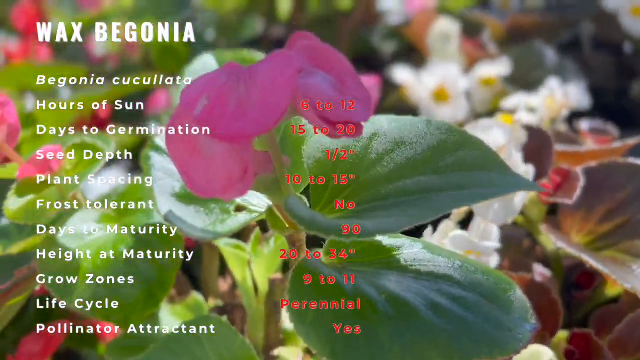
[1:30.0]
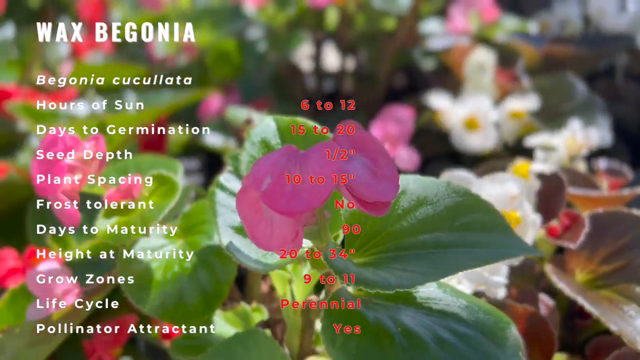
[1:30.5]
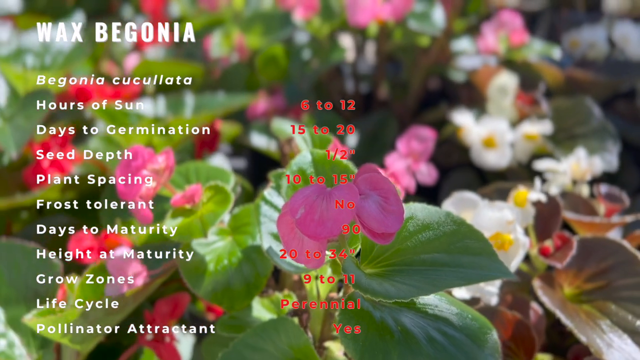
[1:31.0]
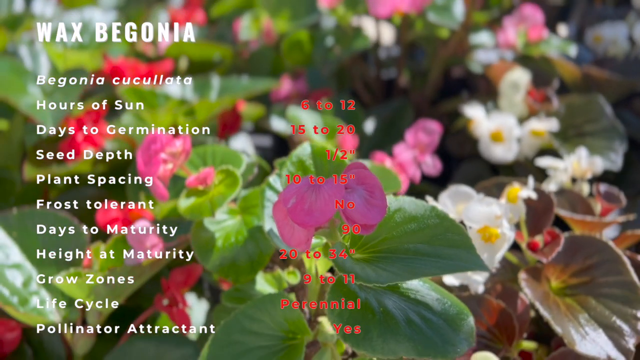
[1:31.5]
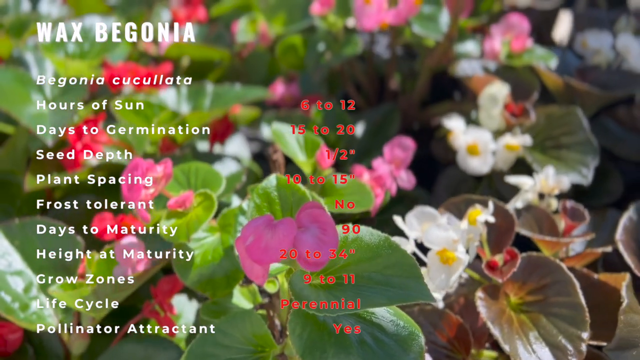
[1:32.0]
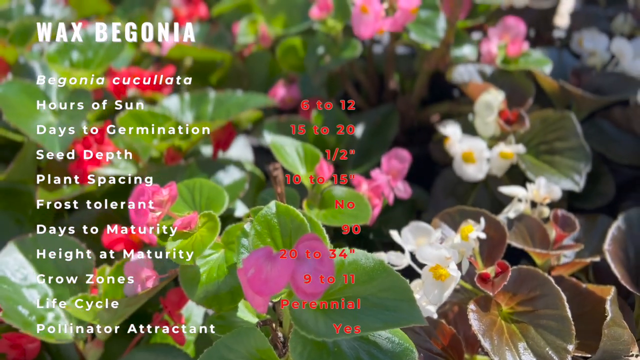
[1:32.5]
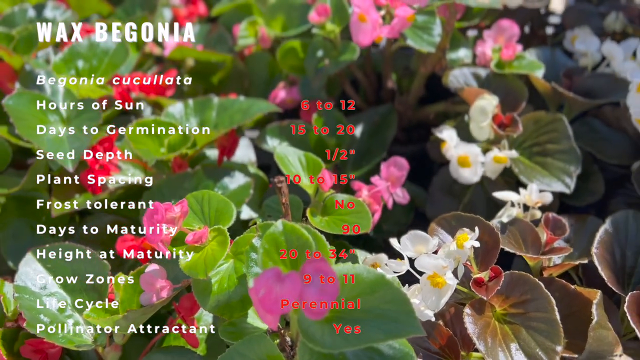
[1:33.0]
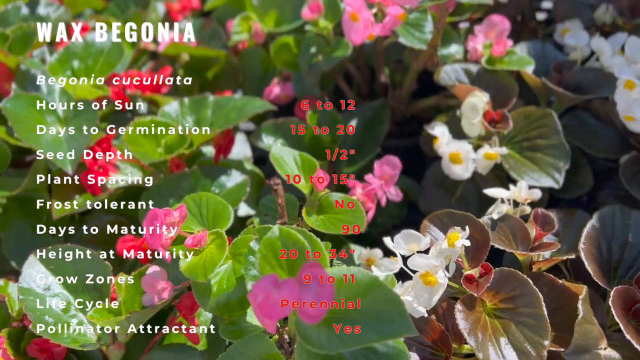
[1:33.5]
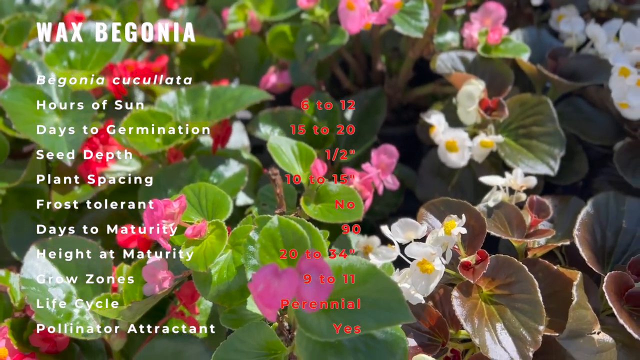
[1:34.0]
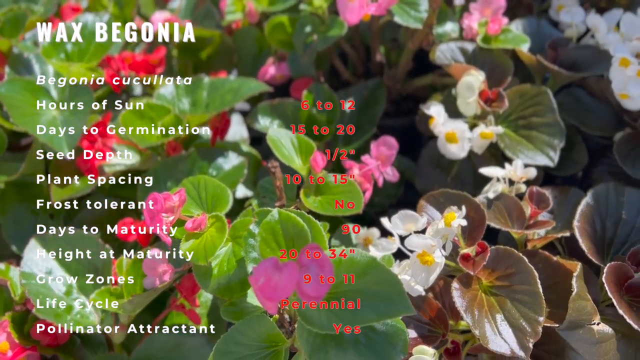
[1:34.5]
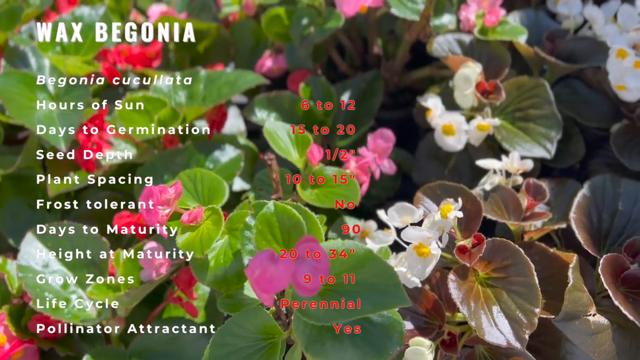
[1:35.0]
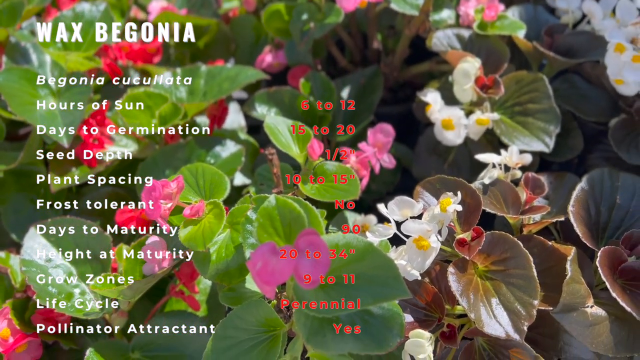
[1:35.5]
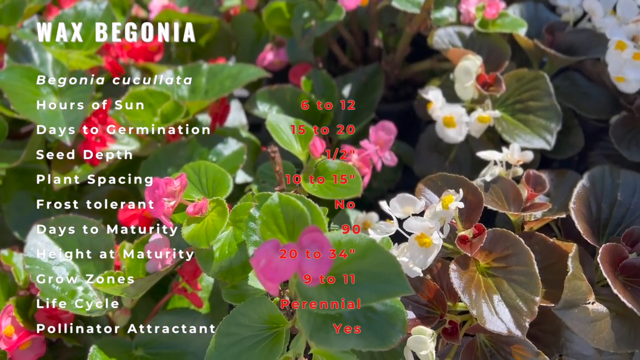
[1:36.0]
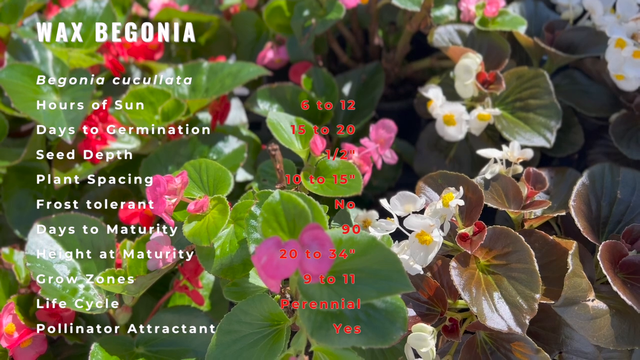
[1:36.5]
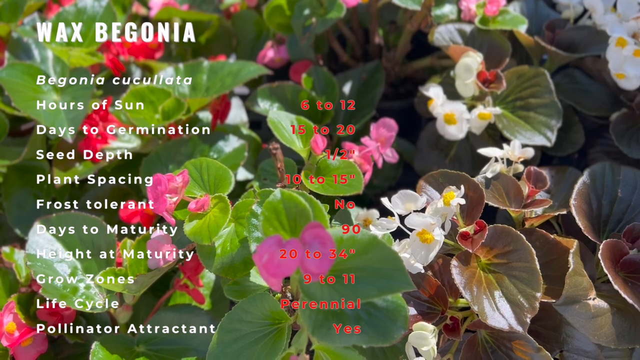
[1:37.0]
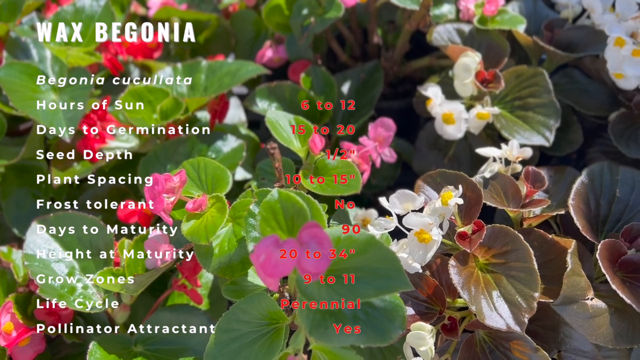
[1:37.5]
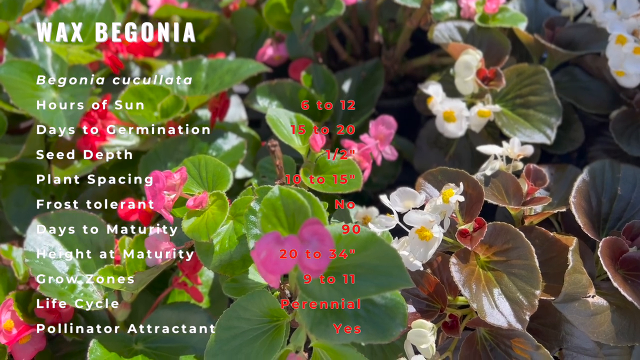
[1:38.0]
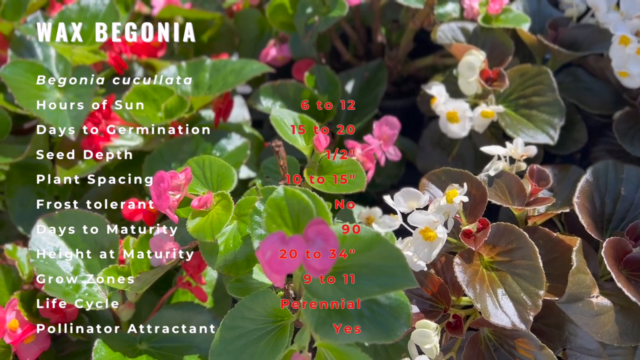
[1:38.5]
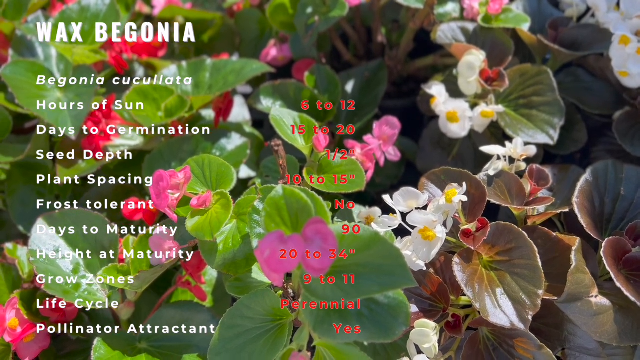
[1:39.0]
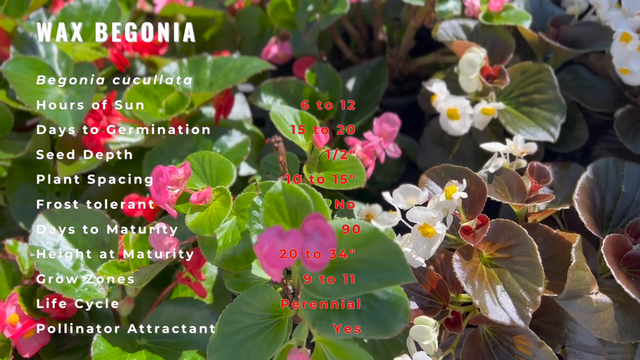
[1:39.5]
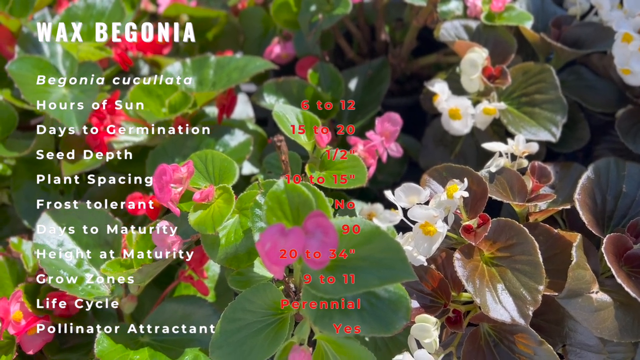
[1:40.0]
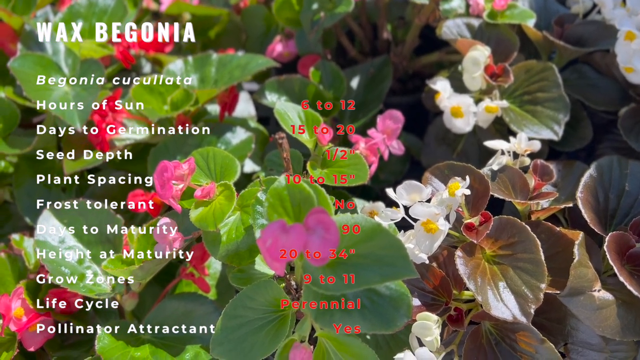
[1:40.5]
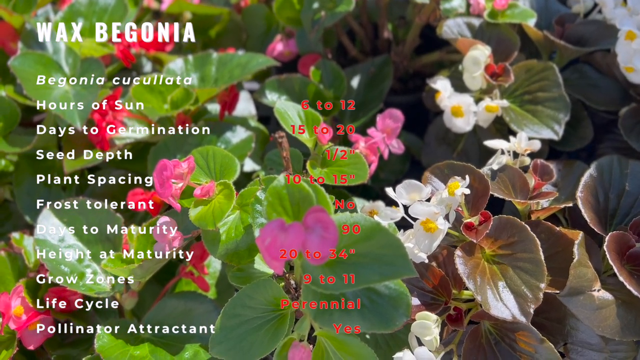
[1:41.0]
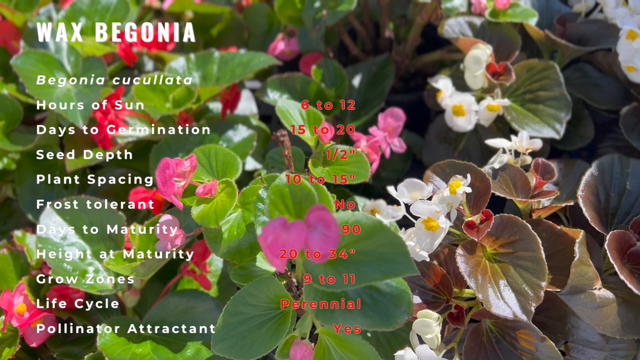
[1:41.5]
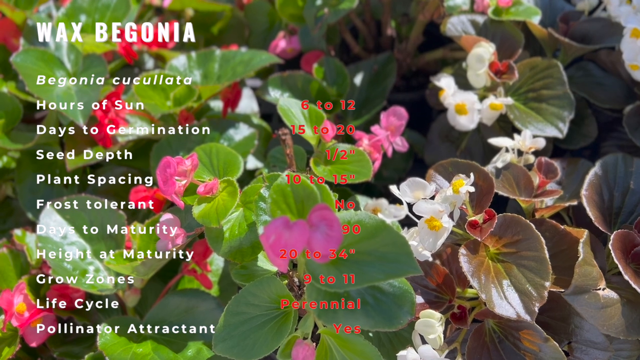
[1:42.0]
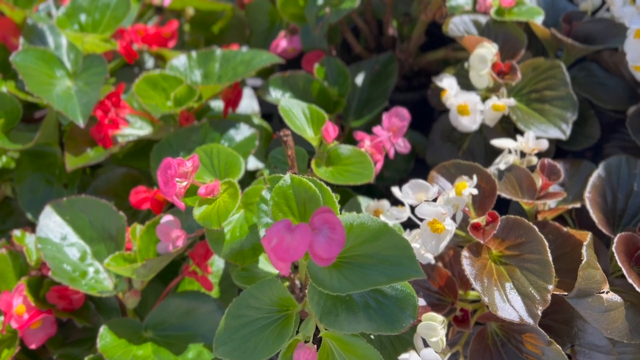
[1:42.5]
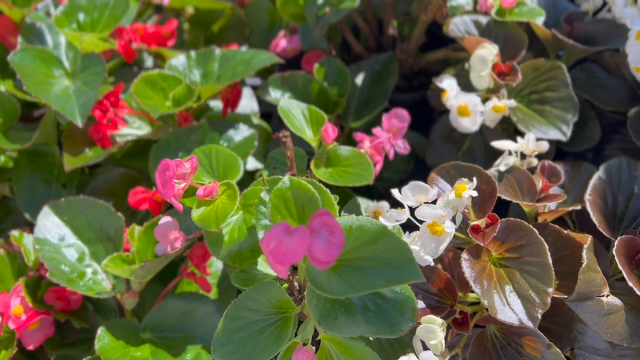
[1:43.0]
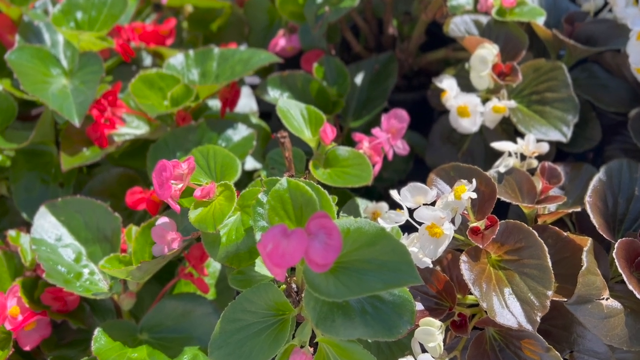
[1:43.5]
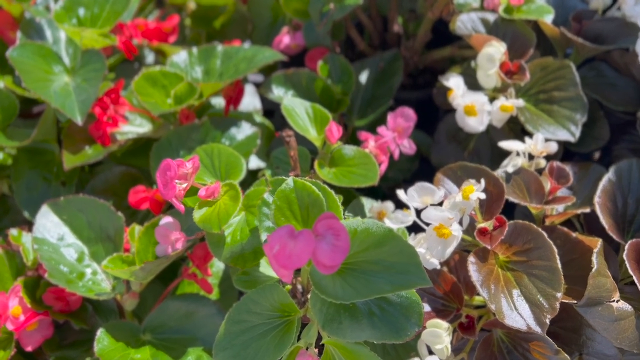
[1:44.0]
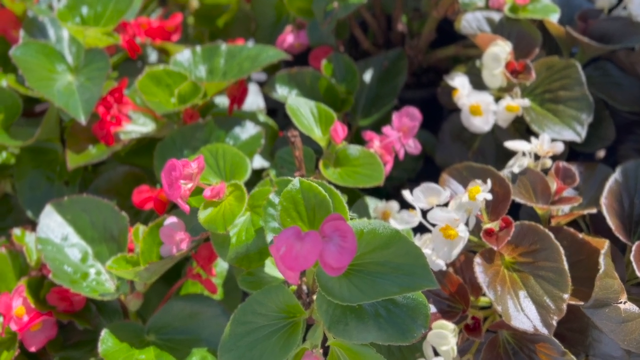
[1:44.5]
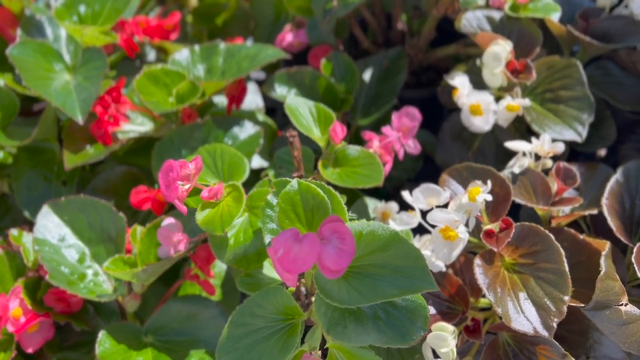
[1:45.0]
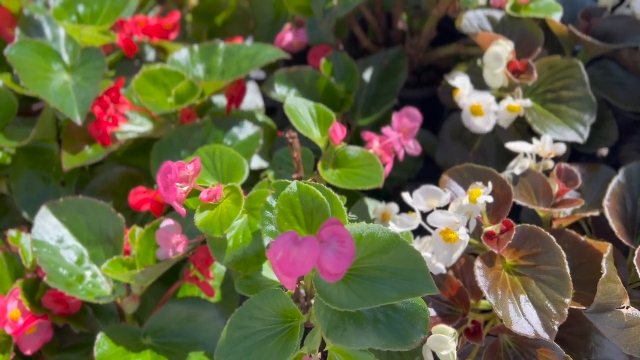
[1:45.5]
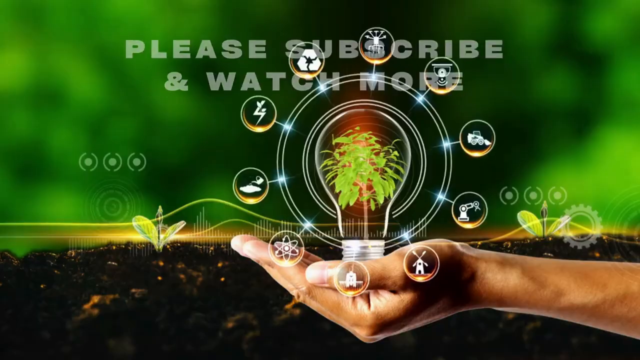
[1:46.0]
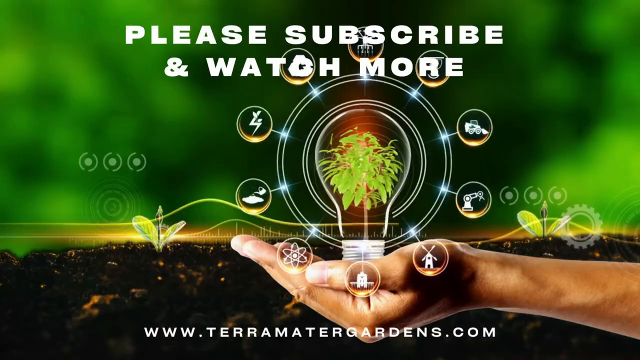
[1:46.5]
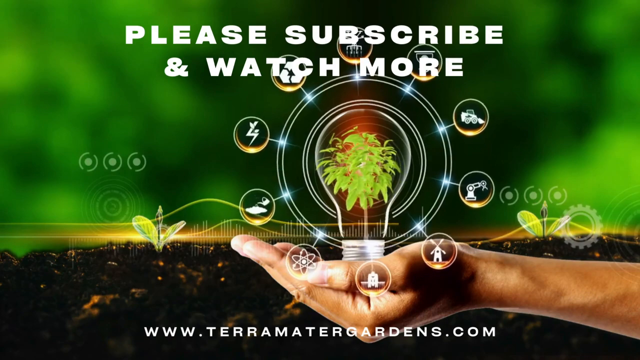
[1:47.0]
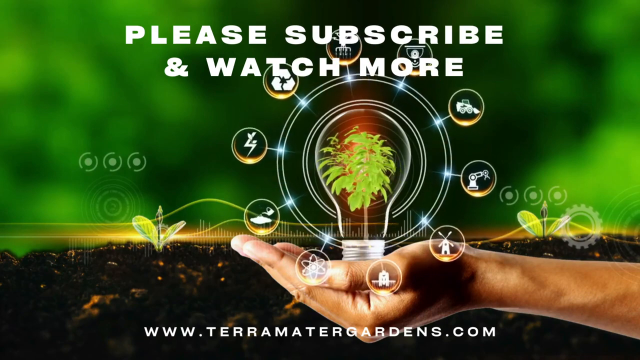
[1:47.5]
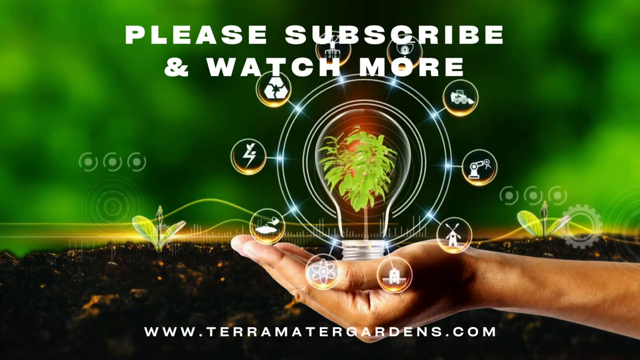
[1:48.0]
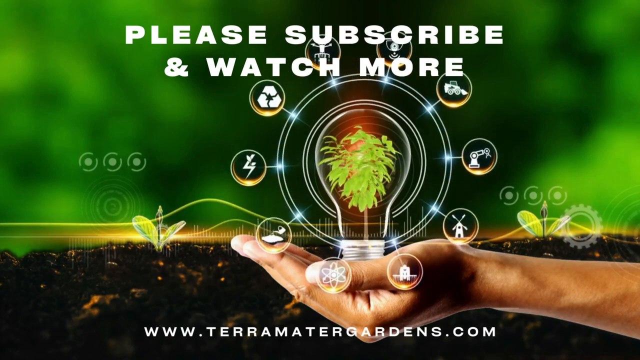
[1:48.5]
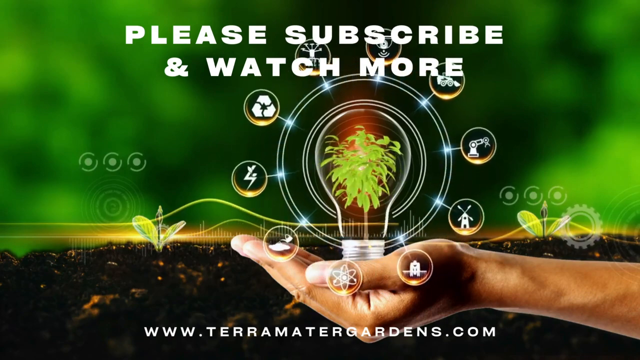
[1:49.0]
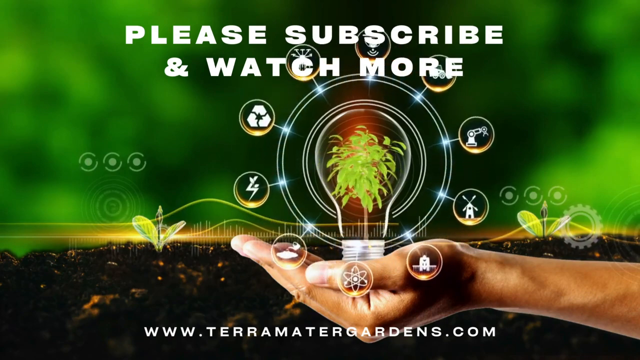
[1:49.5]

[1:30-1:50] Outdoors, the camera pans around a plant, zoomed in on it. The plant has bright green leaves and some dark green leaves. There are two different types of flowers: a little pink one with bright green leaves, and a white one with a little yellow ball in the center, apparently the stamen, which has dark green leaves. Sunlight is over the plants. Text appears in white on the left and in red on the right, the red being nearly impossible to read. It reads "wax begonia, begonia cuculata, hours of sun 6 to 12, days to germination 15 to 20, seed depth one half inch, plant spacing 10 to 15 inches, frost tolerant no, days to maturity 90, height at maturity," with the height and growth zones values unreadable.